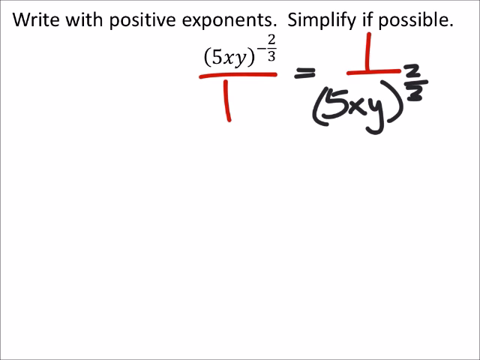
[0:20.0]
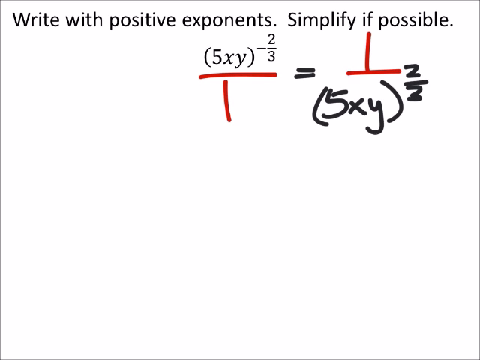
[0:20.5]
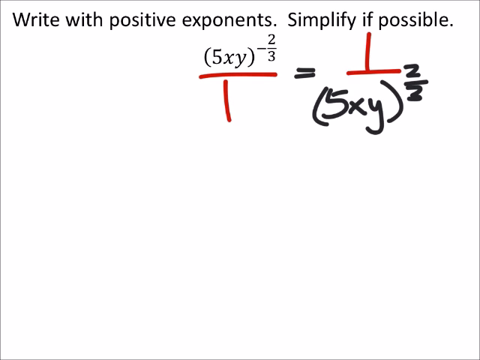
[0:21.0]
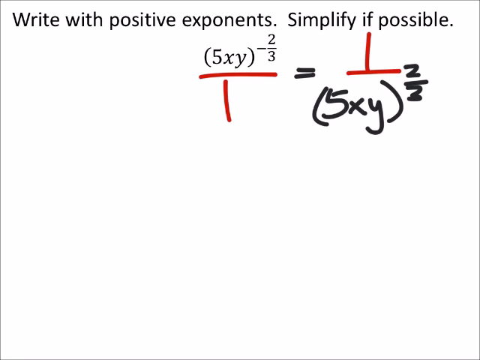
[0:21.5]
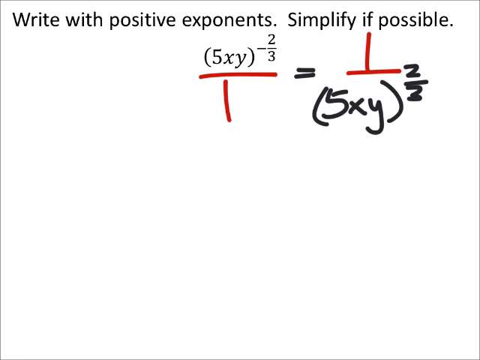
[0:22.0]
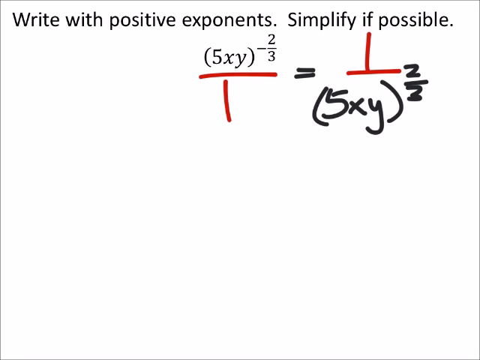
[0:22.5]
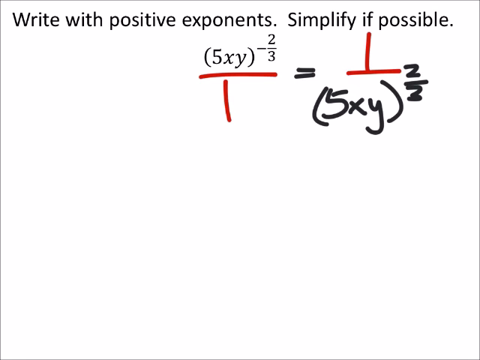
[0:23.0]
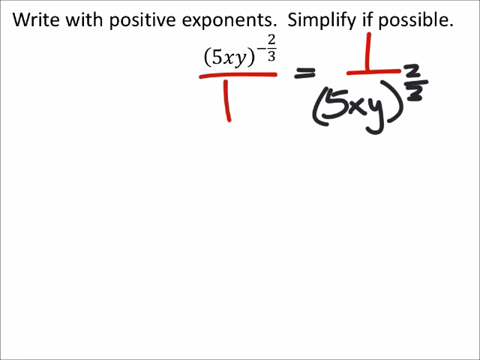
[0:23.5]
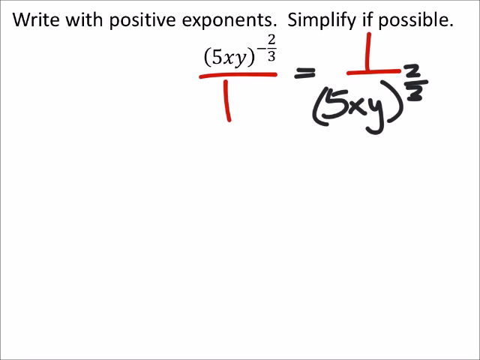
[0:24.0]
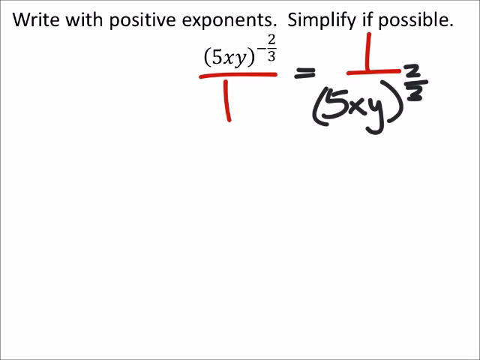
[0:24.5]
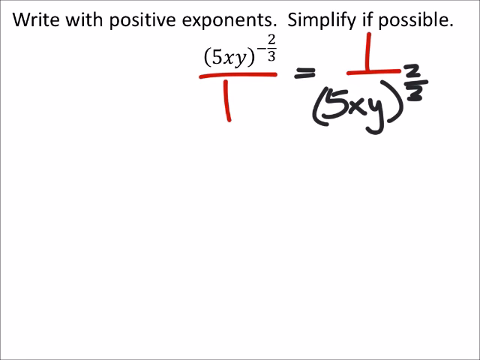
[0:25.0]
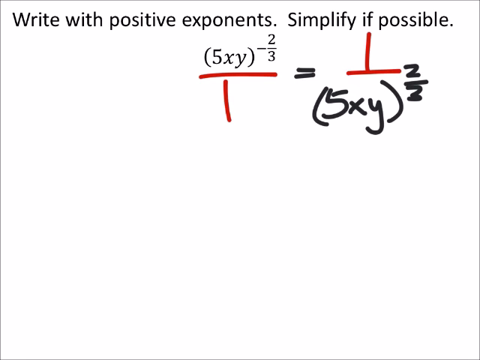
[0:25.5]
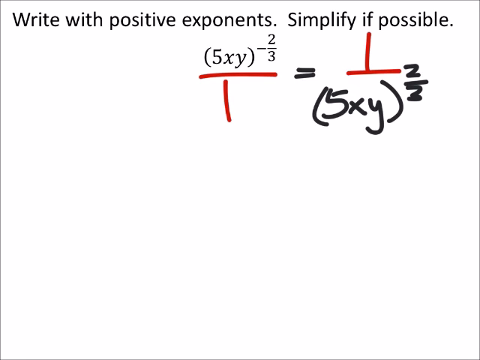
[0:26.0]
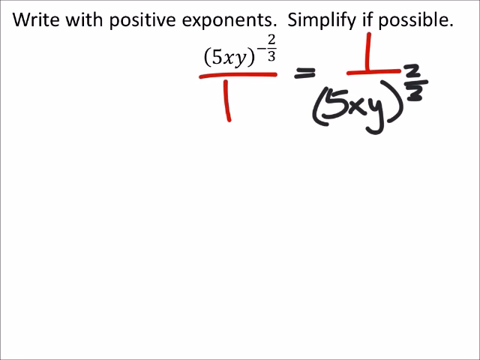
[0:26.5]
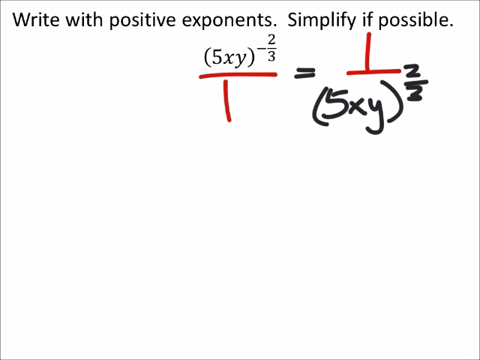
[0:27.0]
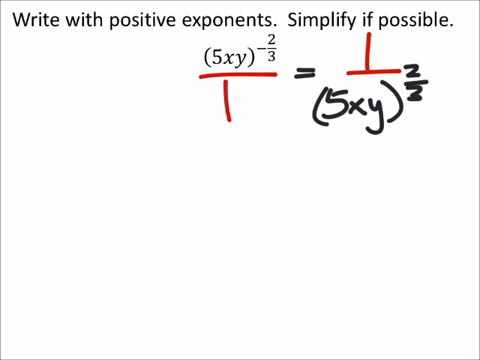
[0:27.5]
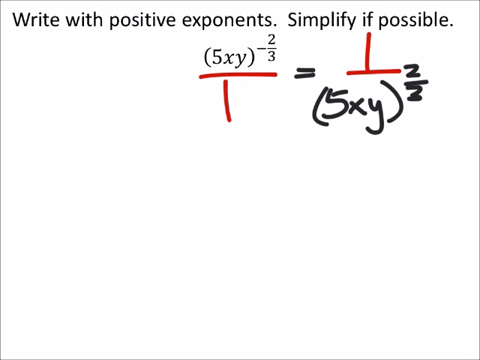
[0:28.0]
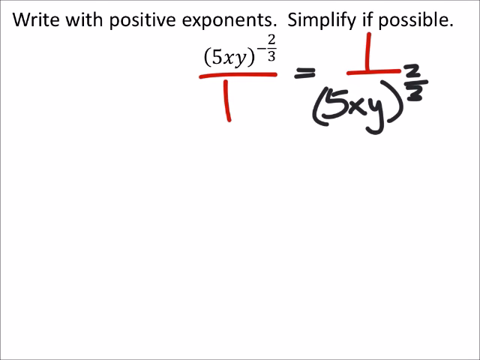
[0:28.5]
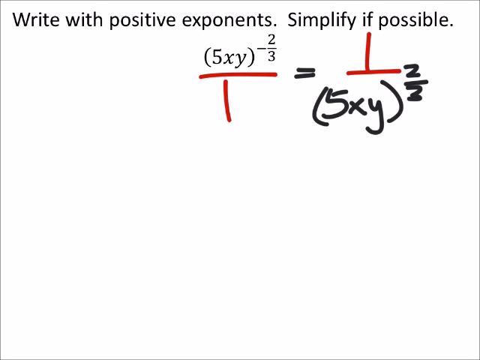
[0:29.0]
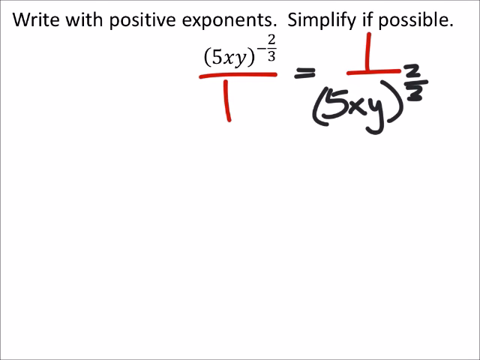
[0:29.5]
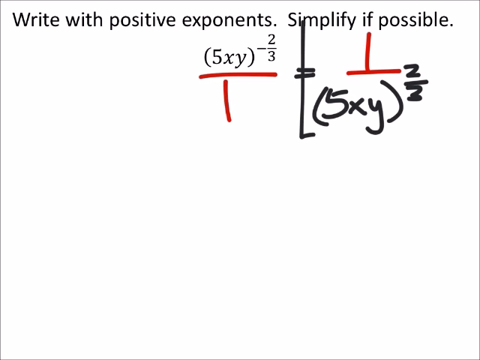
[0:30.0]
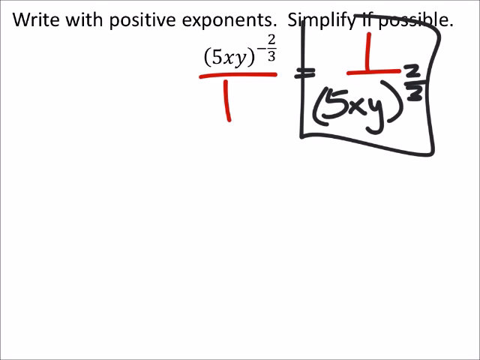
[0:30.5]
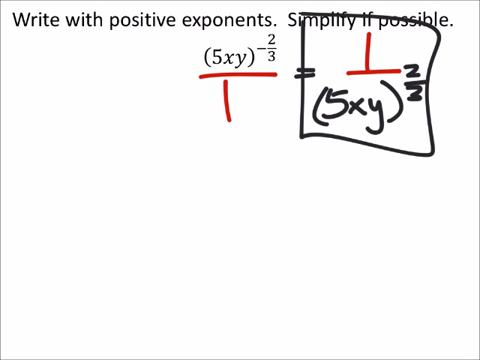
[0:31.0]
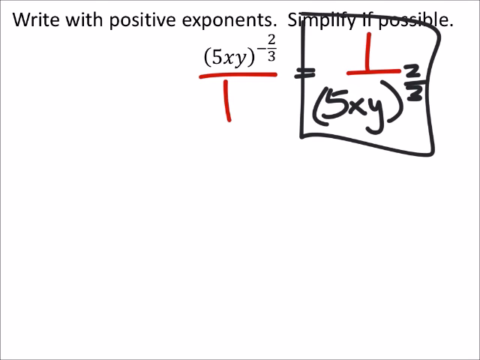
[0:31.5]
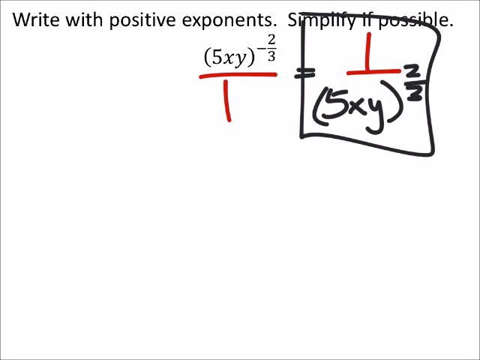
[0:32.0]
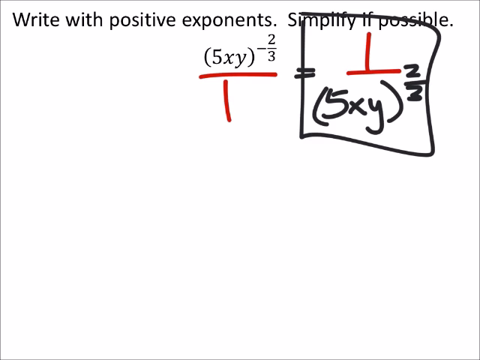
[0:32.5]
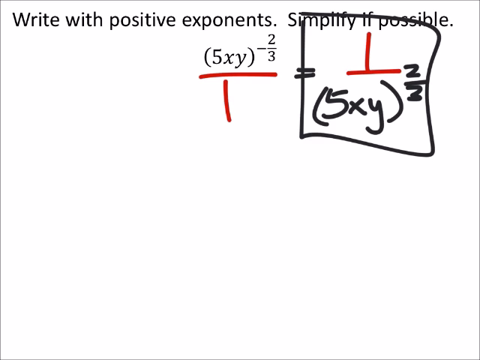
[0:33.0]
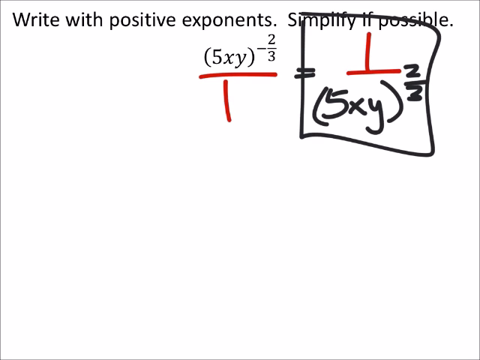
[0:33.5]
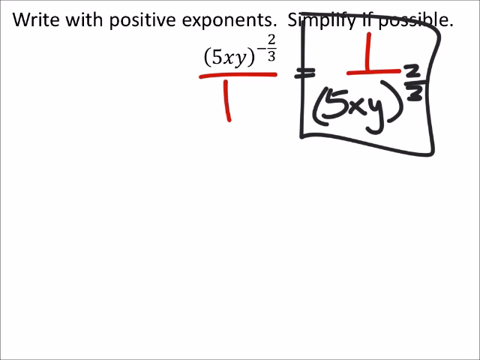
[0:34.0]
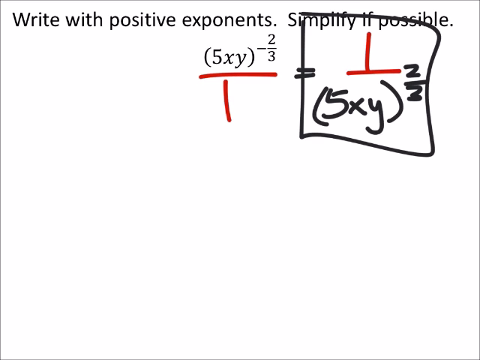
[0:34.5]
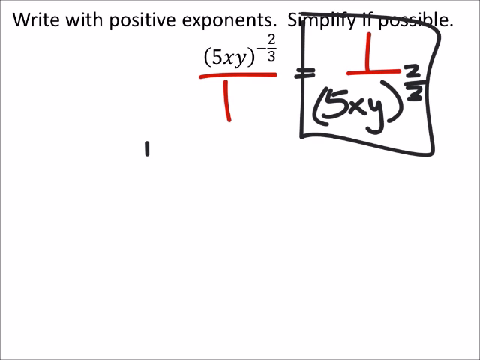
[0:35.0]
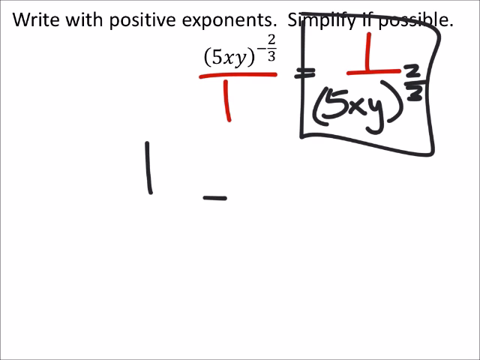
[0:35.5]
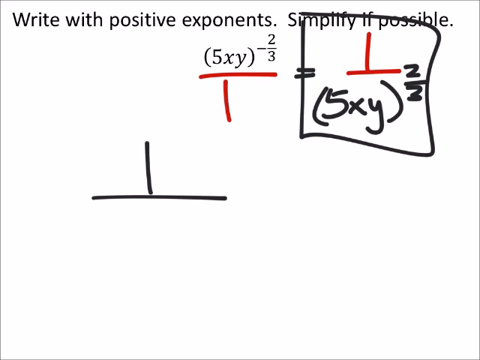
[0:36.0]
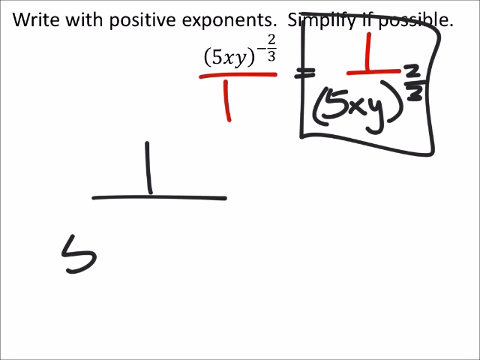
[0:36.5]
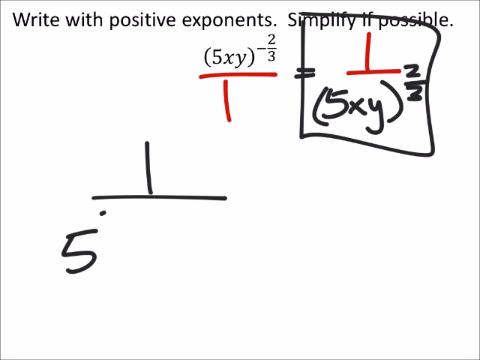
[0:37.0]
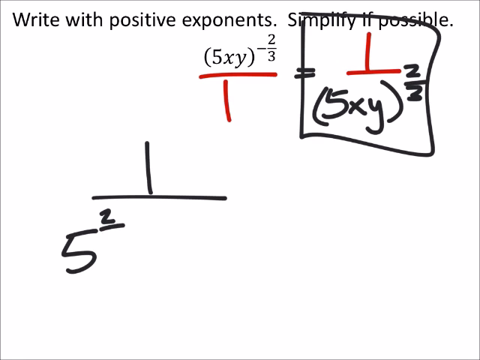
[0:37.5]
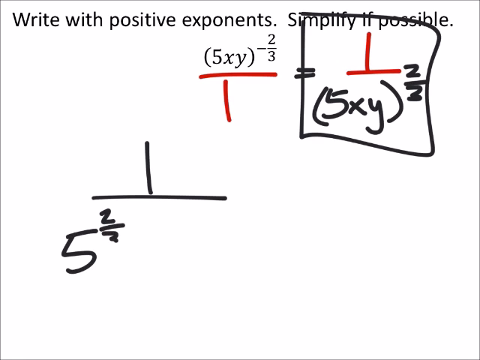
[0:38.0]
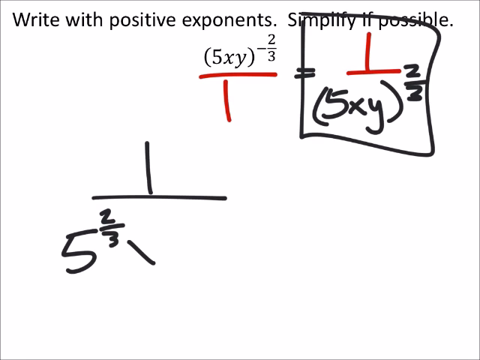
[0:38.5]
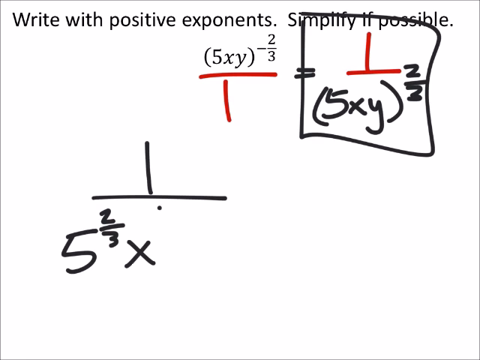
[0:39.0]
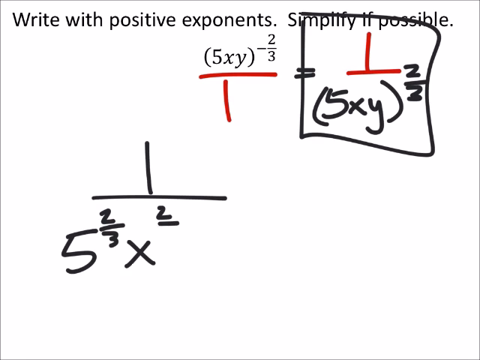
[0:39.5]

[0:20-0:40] The whiteboard stays unchanged for a while. Then, in black pen, a box is drawn around the new expression, 1 over 5xy to the power 2 over 3. The box starts from the i under "simplify", goes down through the equals sign, to the right, up, and then to the left through the text; it is hand-drawn rather than ruled. Further down the screen and more towards the left, something else is written: a 1 with a dividing line over 5 to the power two-thirds, which seems related to the boxed term.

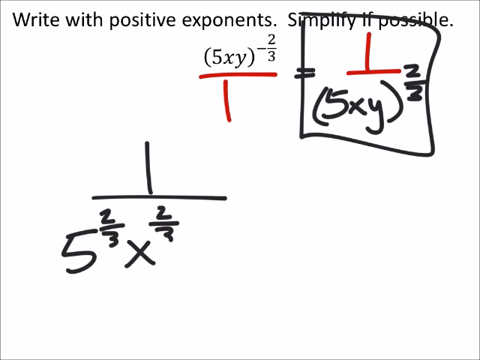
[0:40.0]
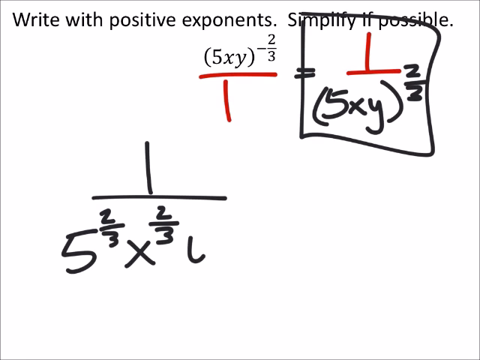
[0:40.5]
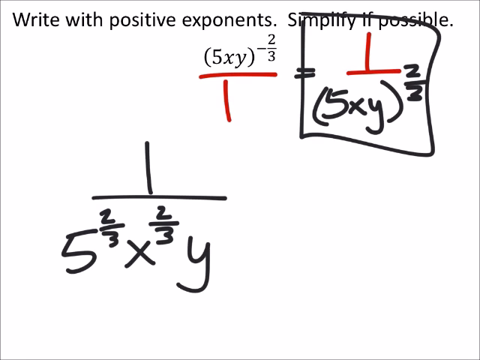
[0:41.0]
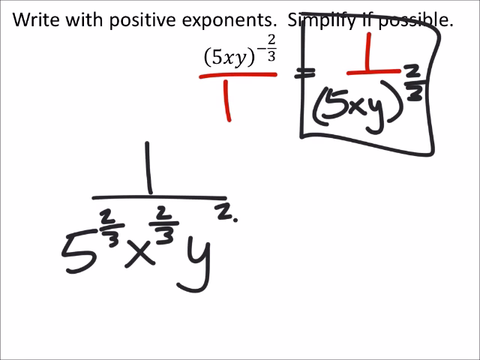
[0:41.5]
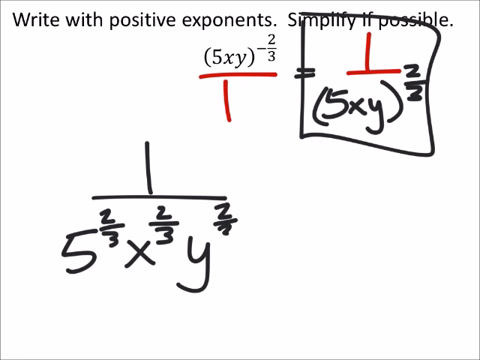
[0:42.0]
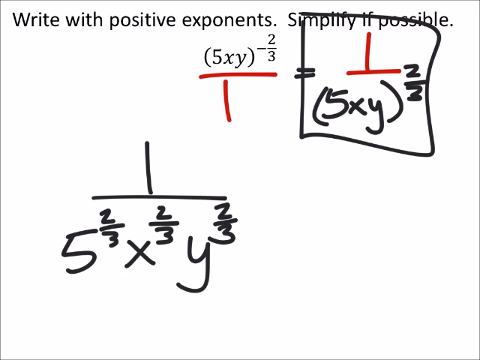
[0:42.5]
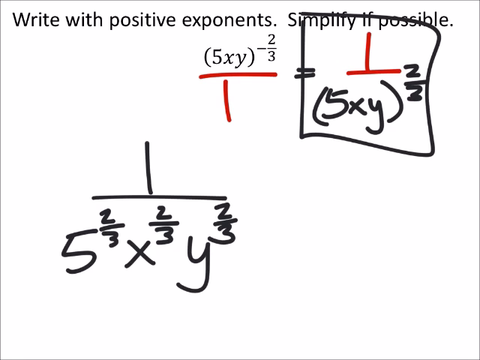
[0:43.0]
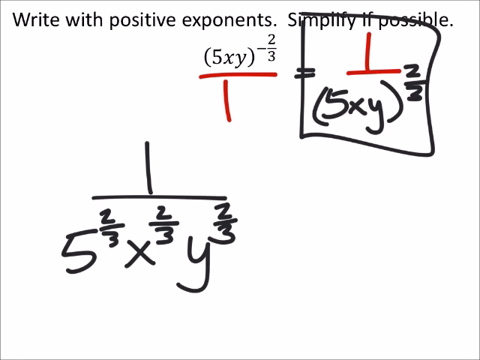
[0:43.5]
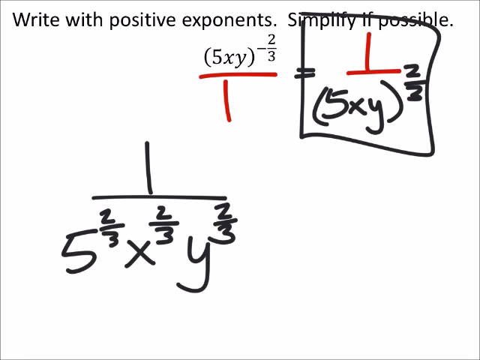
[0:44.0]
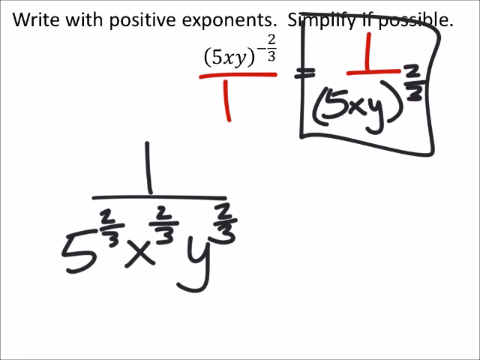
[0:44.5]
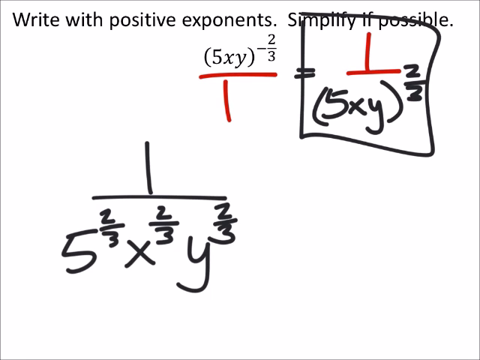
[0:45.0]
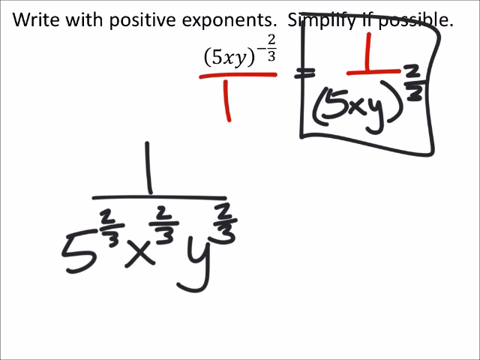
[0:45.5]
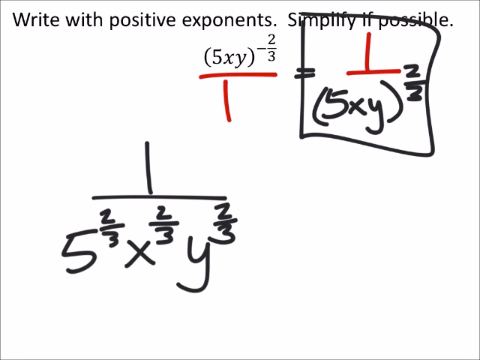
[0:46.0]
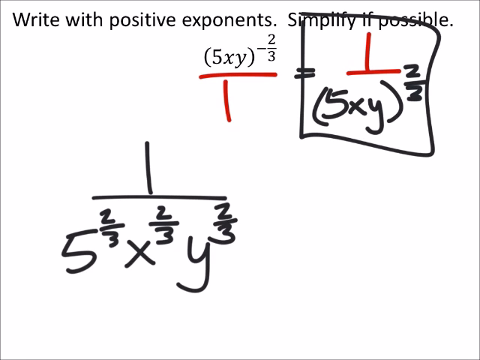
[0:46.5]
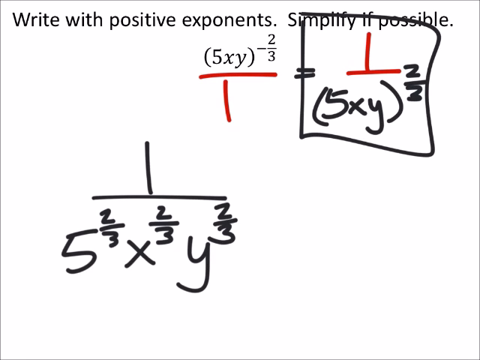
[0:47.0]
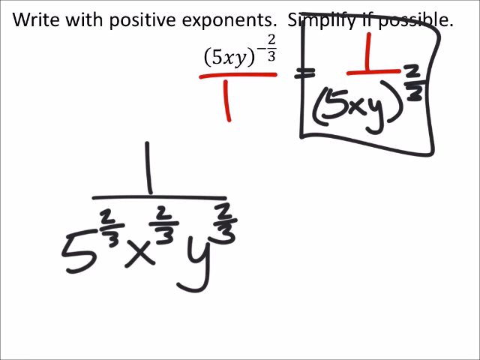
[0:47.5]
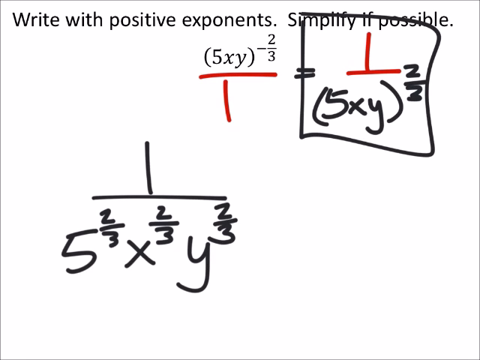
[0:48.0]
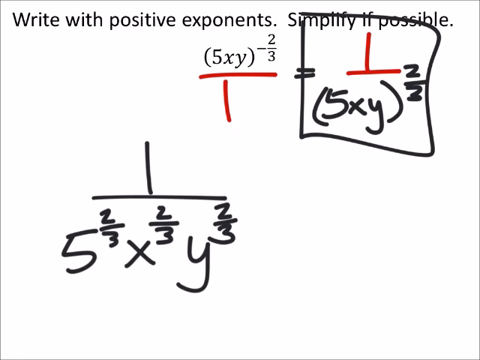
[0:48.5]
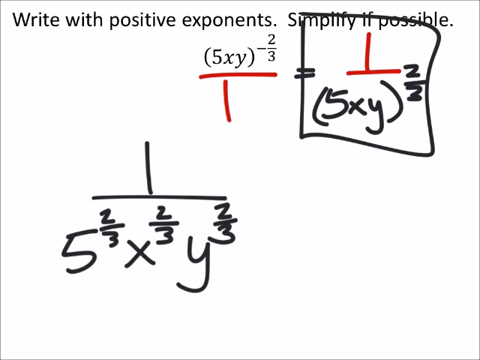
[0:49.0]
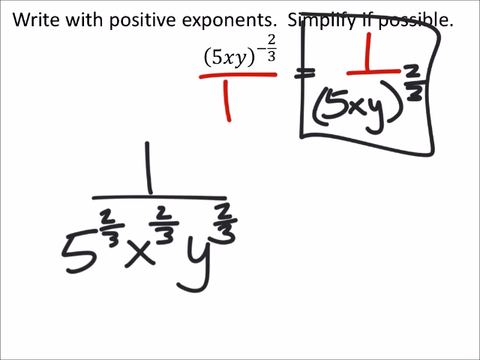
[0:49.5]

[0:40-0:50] The lower expression reads 1 divided by 5 to the power two-thirds times x to the power two-thirds times y to the power two-thirds, with each individual part of 5xy raised to the power two-thirds. It is equal to the boxed term with the positive power. Nothing else is added, and everything else on the screen, including the original problem, remains exactly the same.